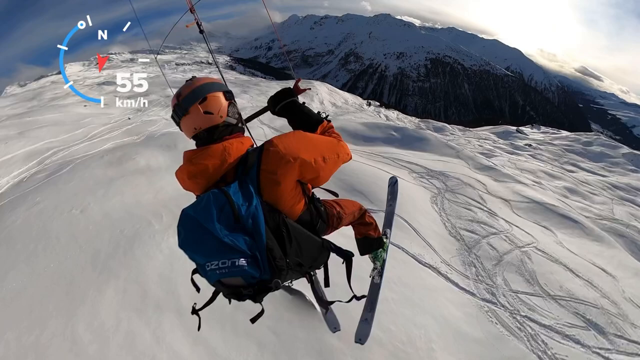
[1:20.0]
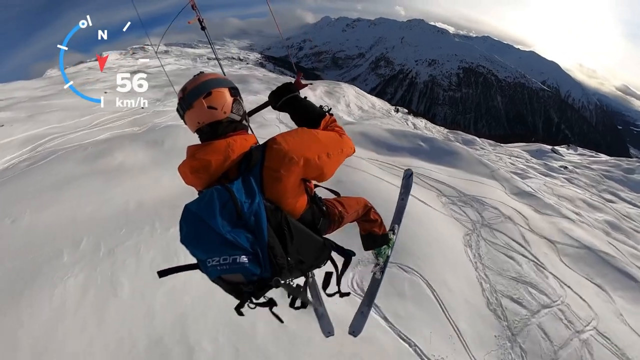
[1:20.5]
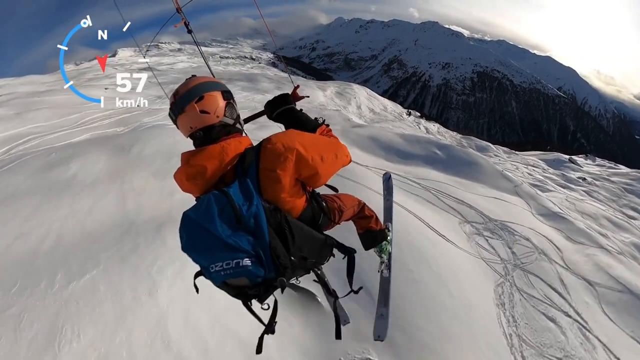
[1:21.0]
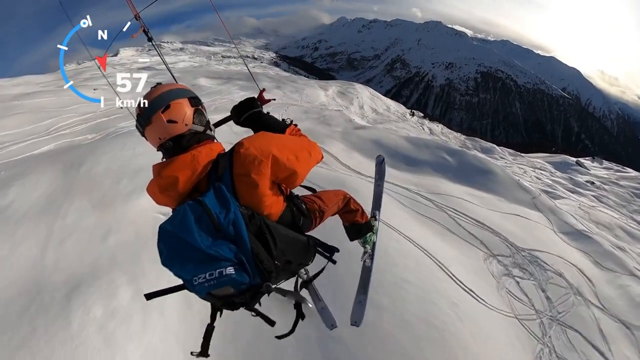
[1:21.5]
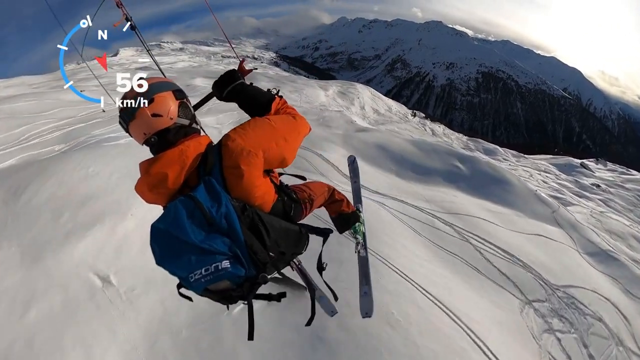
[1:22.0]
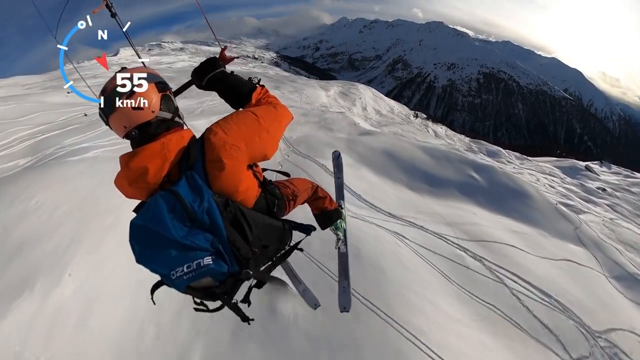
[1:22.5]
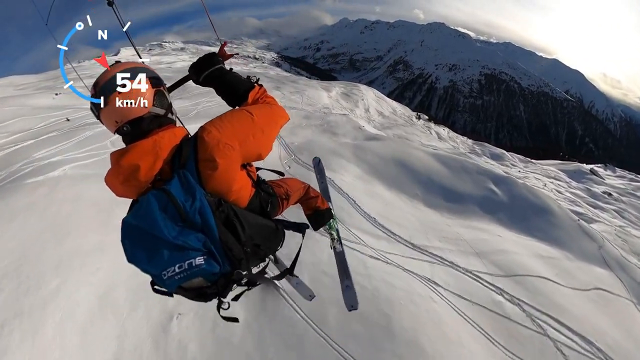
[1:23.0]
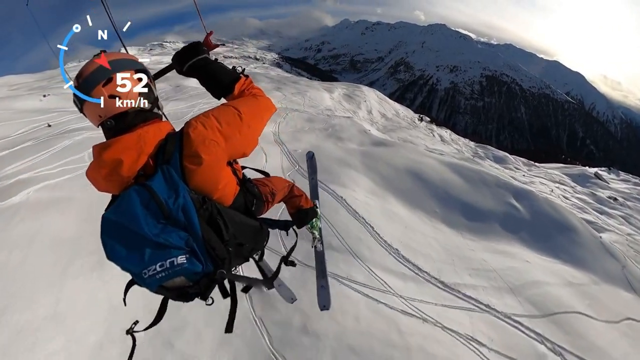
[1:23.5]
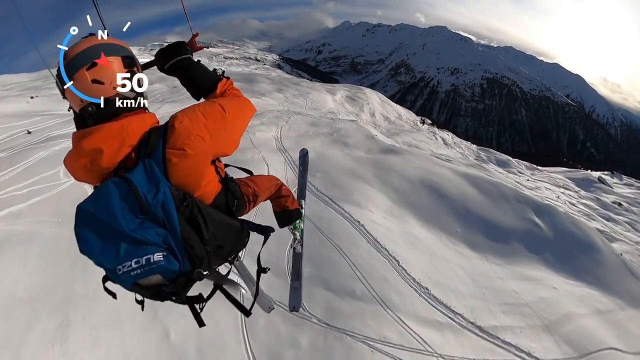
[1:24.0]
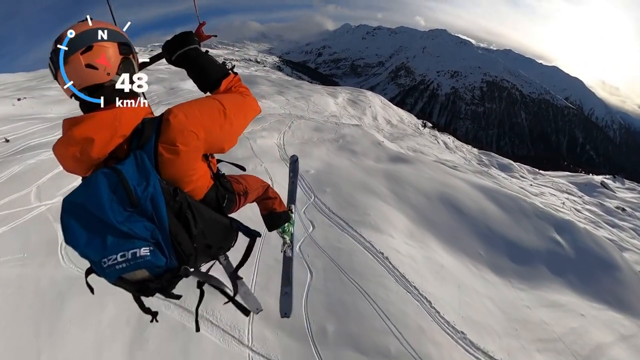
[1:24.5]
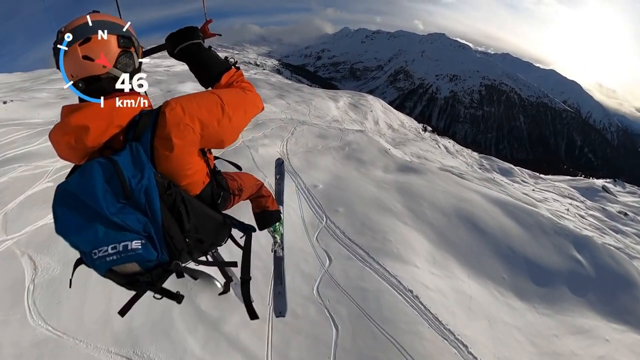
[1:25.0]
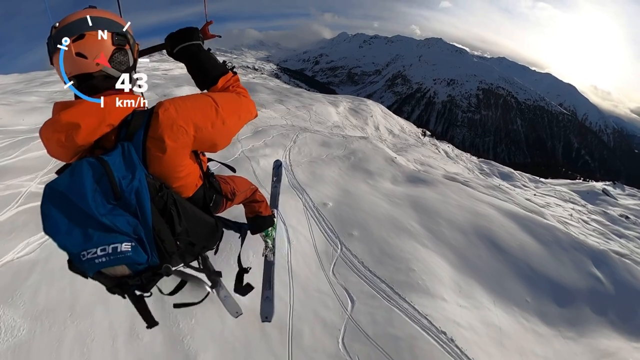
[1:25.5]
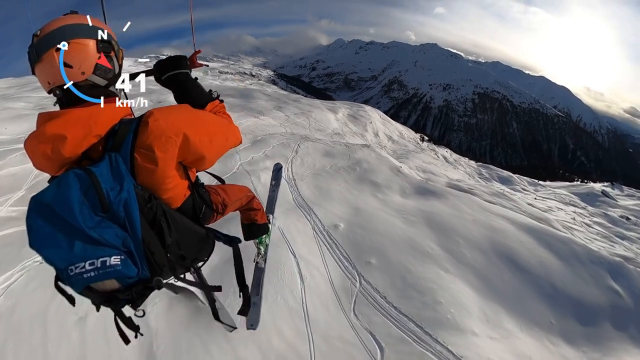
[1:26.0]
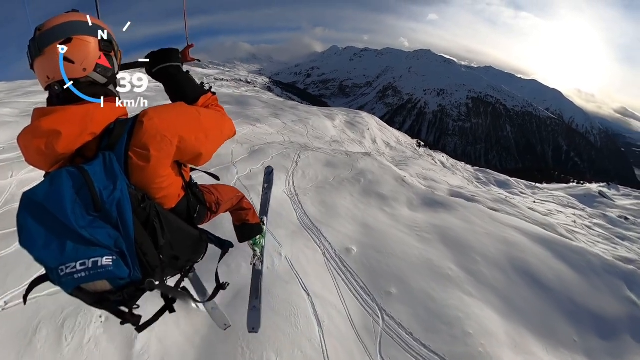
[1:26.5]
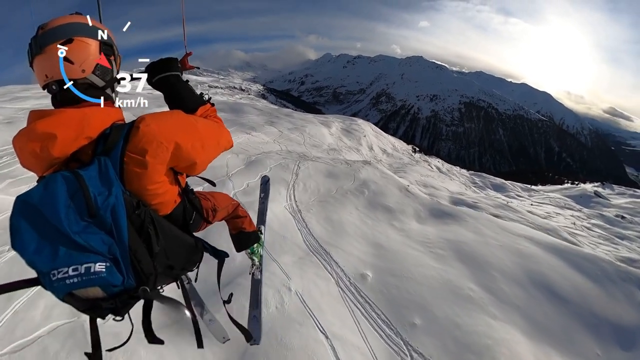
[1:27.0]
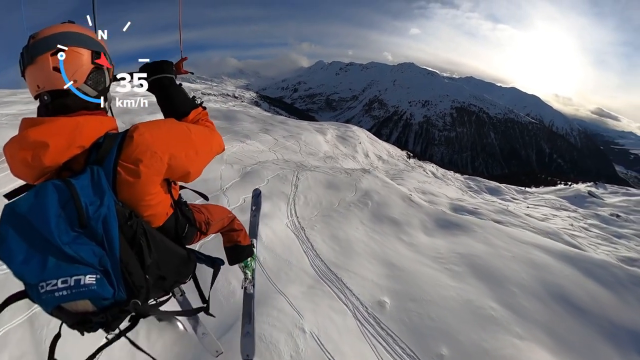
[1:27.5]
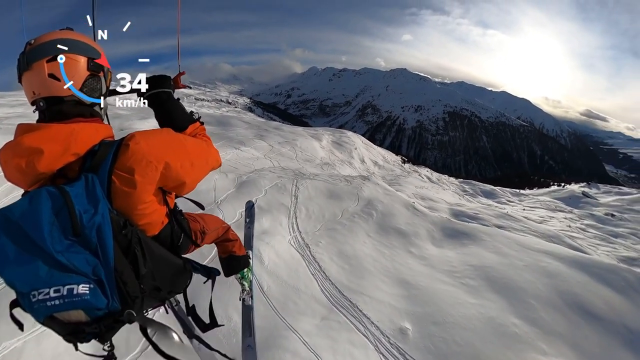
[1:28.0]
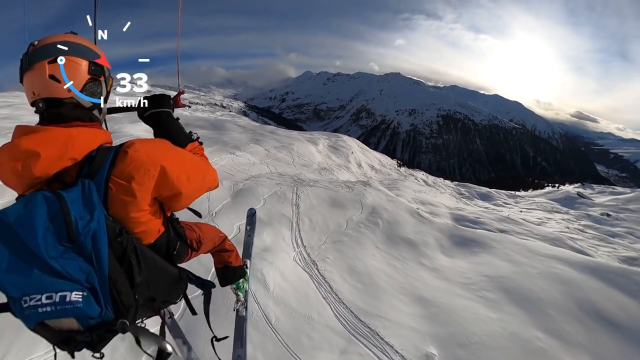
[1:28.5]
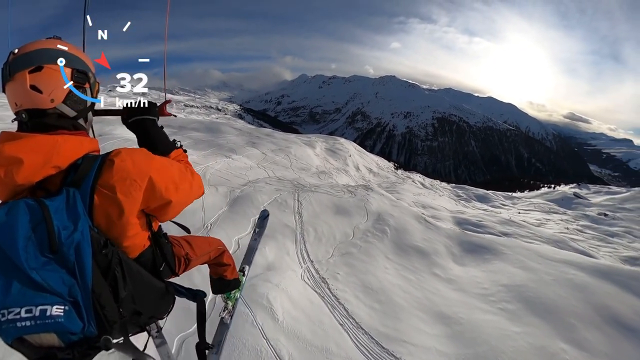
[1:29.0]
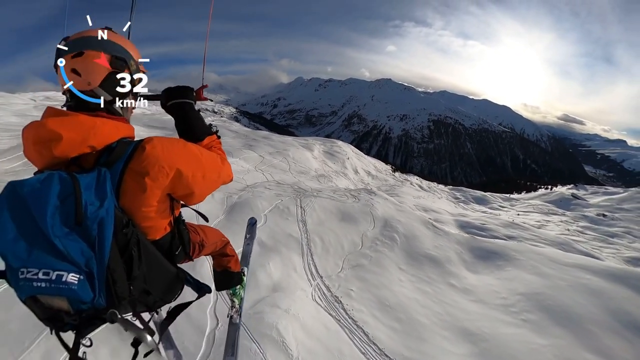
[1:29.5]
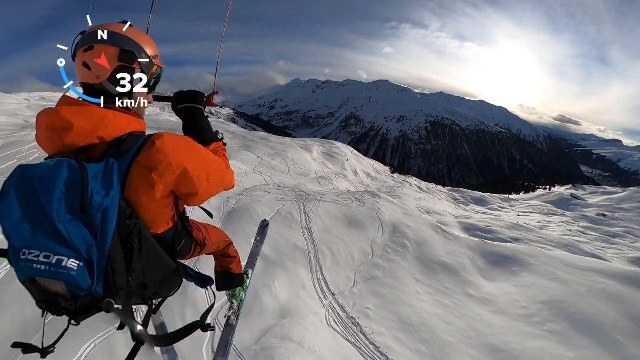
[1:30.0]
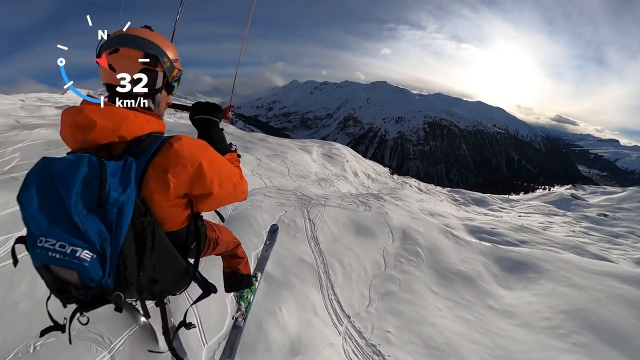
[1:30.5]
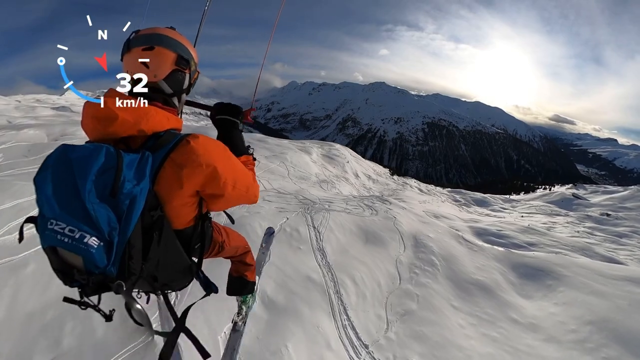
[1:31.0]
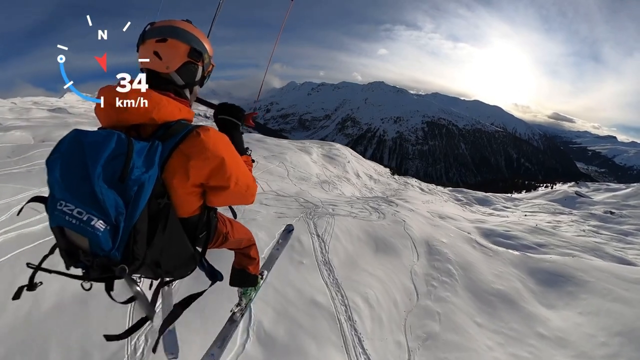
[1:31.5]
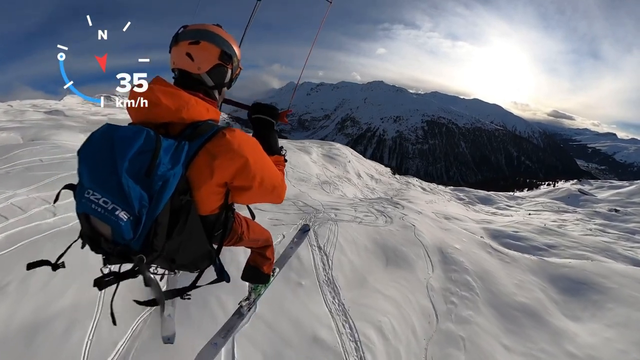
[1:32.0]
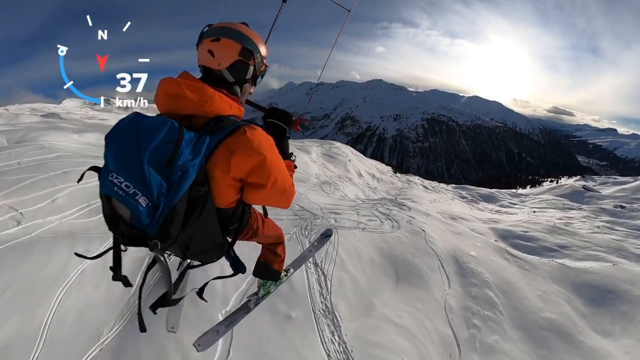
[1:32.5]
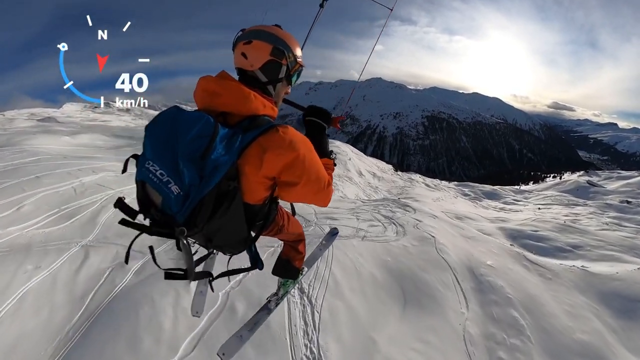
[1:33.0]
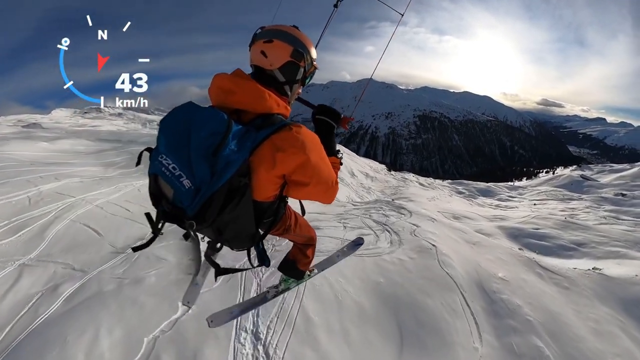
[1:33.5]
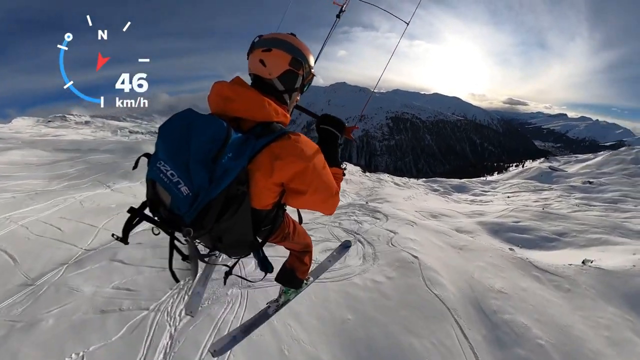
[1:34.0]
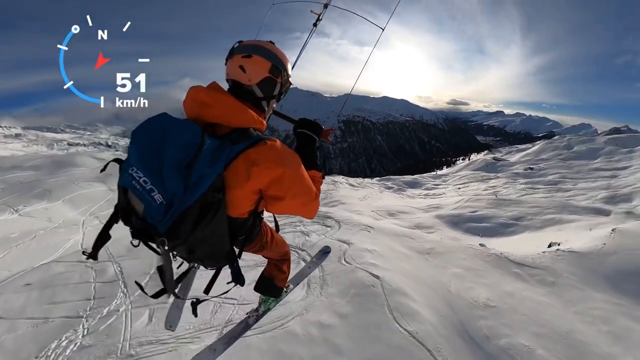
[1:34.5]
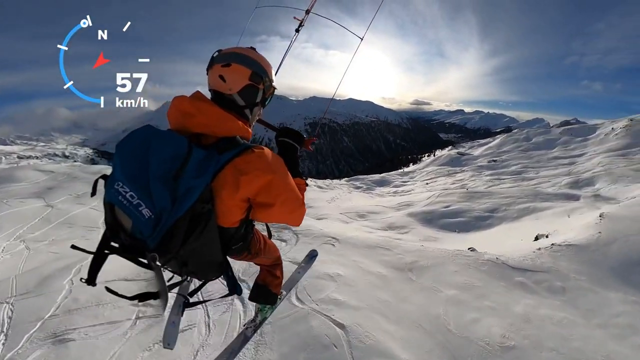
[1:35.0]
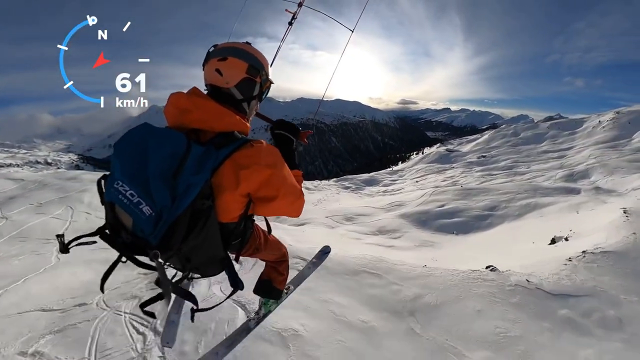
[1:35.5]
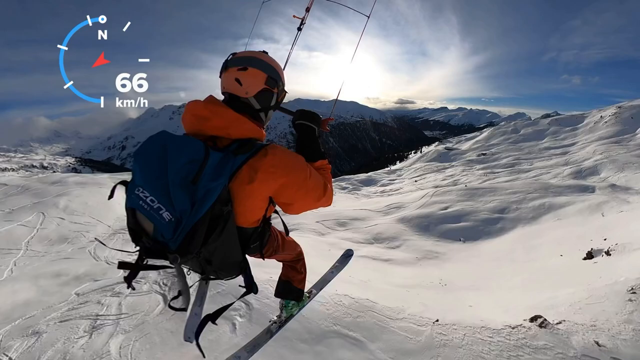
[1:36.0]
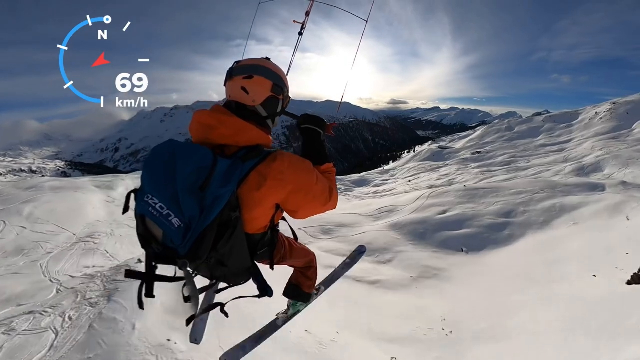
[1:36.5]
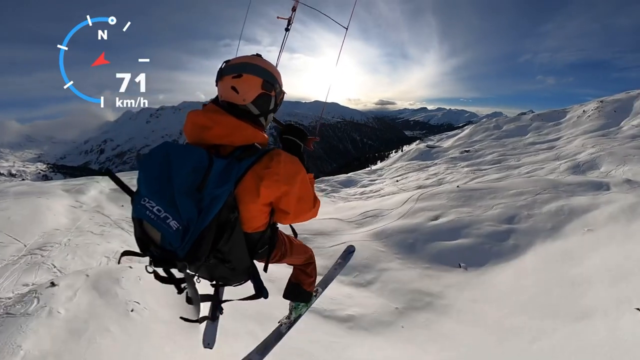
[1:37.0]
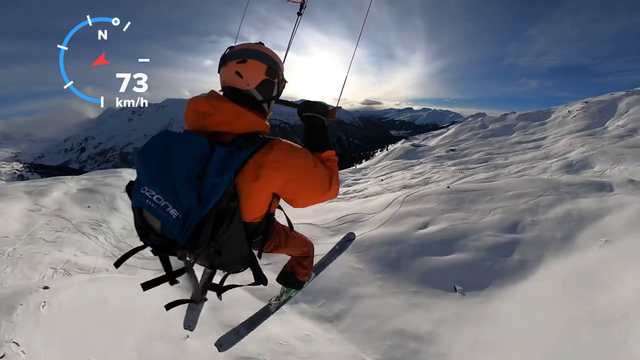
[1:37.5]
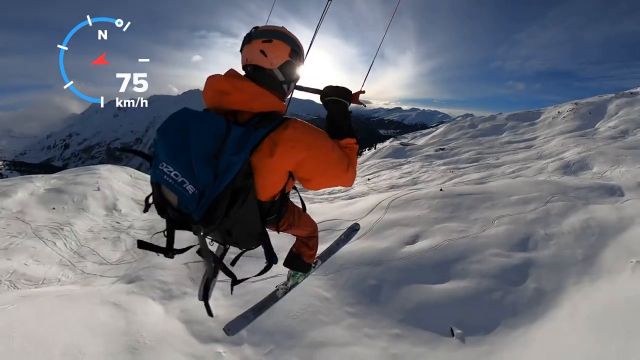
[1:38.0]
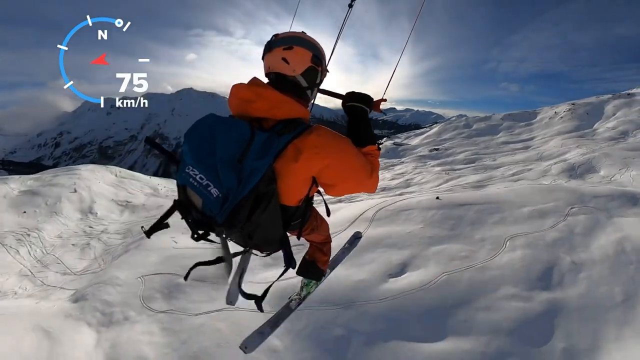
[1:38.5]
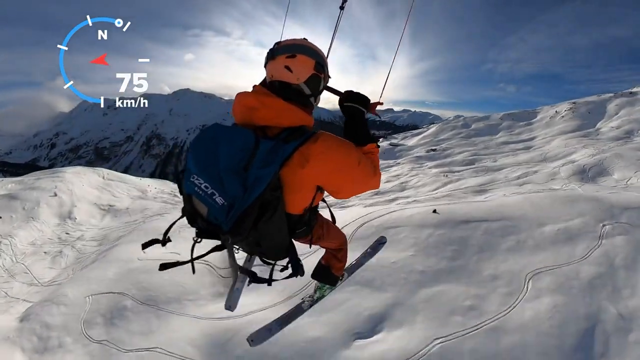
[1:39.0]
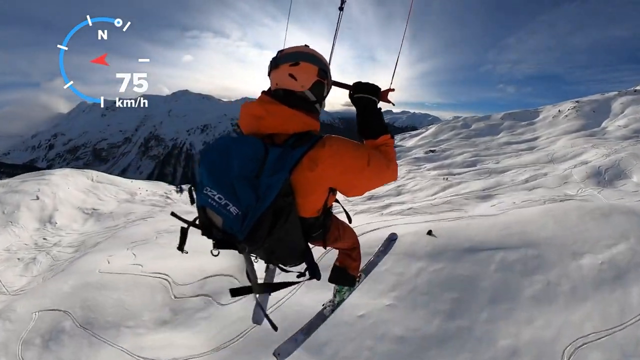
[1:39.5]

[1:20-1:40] The man starts at 57 kilometers per hour and slowly drops a bit as he glides over the mountaintop. There are multiple marks in the snow that look like tracks from people who have skied there before, as well as areas of completely undisturbed snow. The sky is bright and very sunny, with clouds but areas that are mostly blue. The man goes to the left and to the right. The direction changes slightly, and the speed drops and then increases toward the end, reaching 75 kilometers per hour at the very end. It is just the man with the skis and the backpack gliding down the hill.